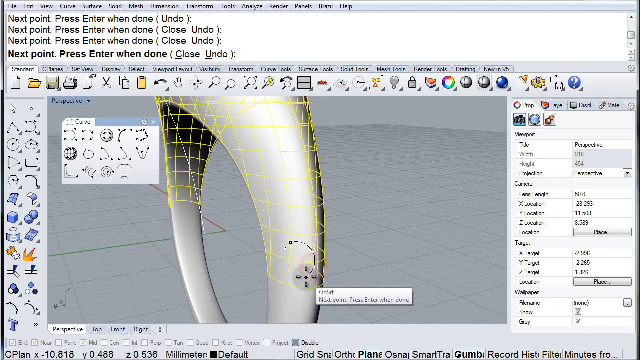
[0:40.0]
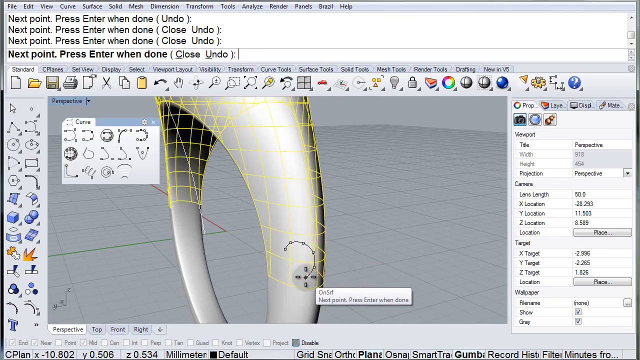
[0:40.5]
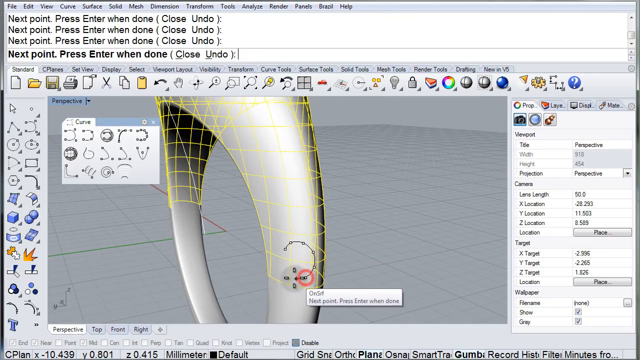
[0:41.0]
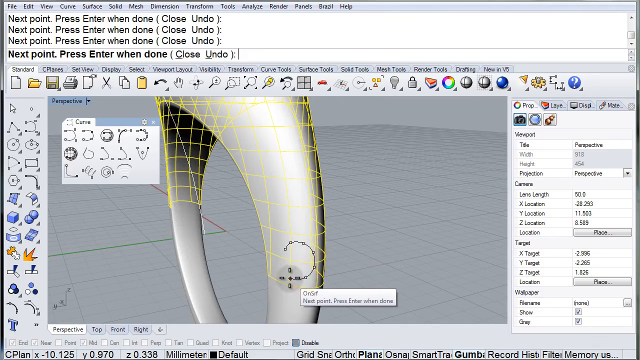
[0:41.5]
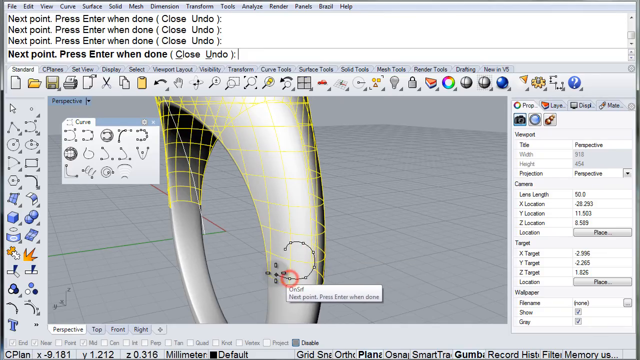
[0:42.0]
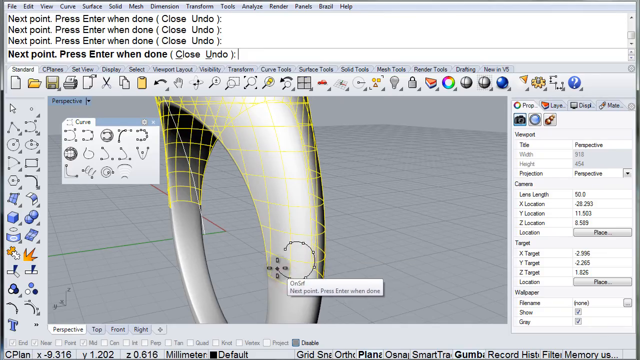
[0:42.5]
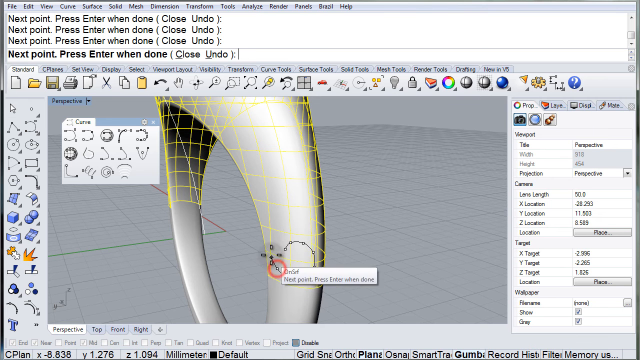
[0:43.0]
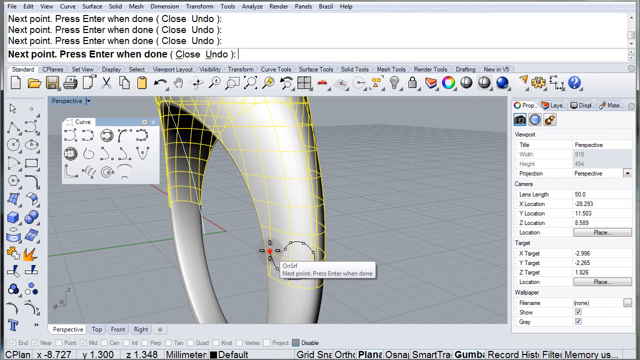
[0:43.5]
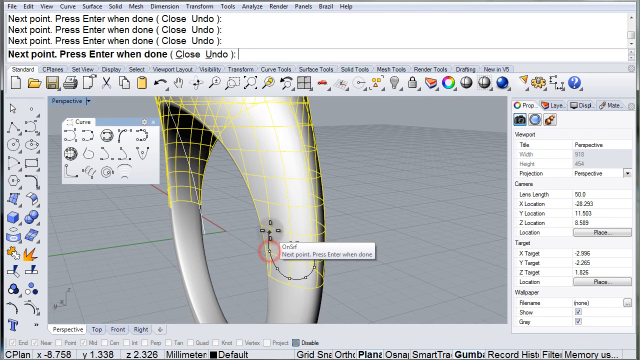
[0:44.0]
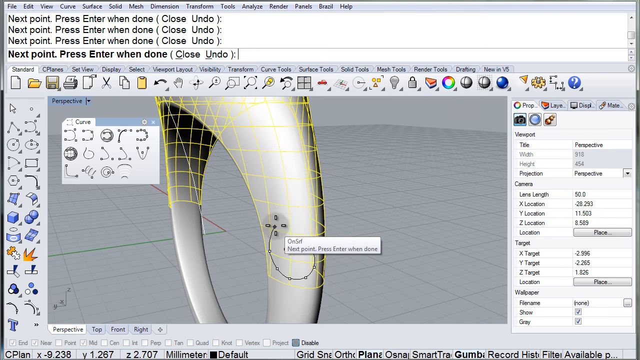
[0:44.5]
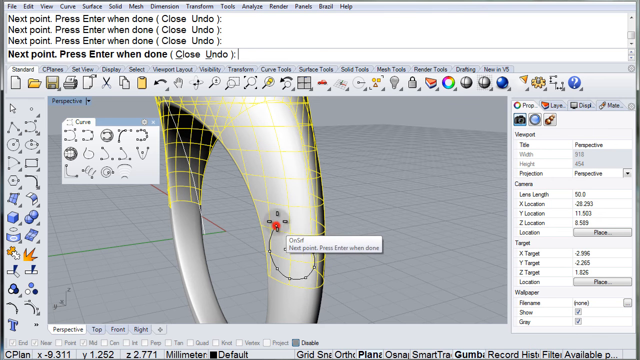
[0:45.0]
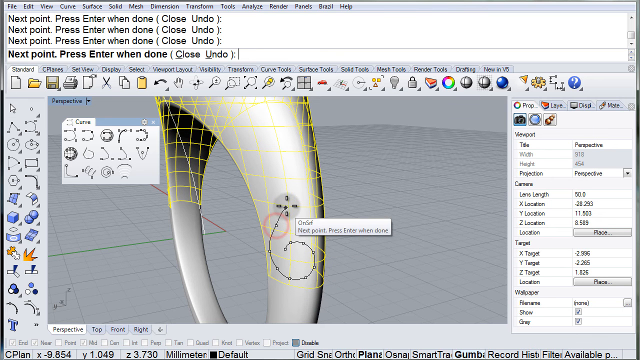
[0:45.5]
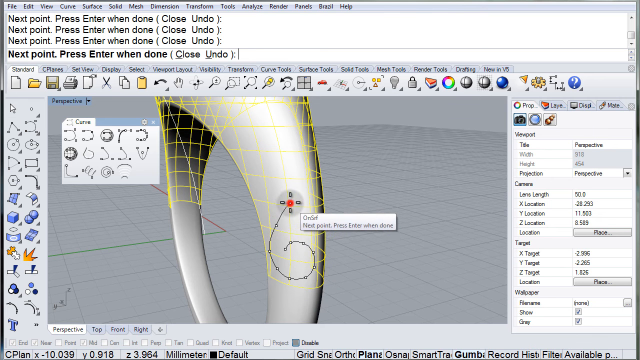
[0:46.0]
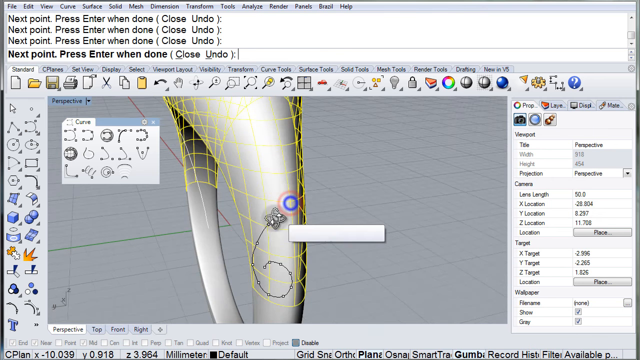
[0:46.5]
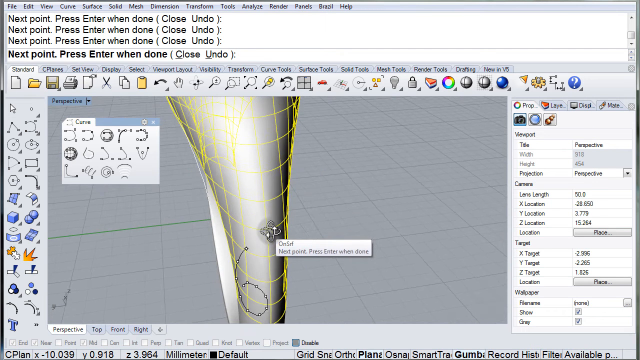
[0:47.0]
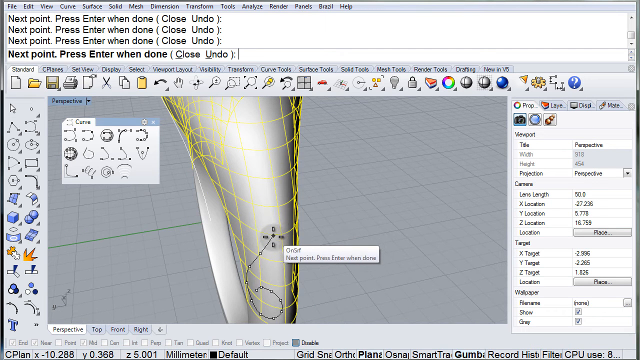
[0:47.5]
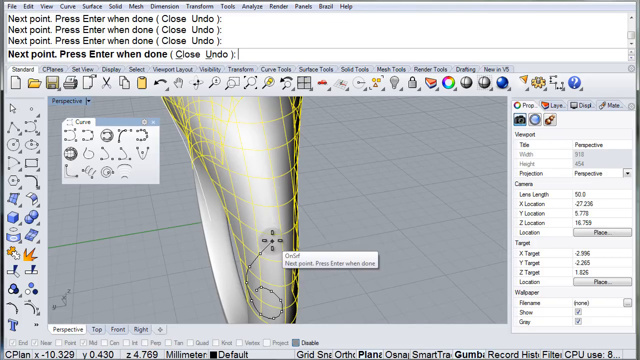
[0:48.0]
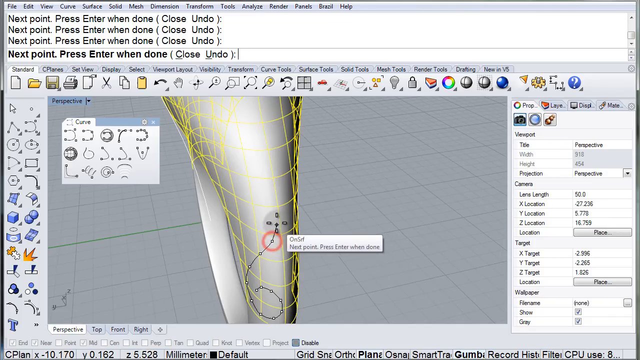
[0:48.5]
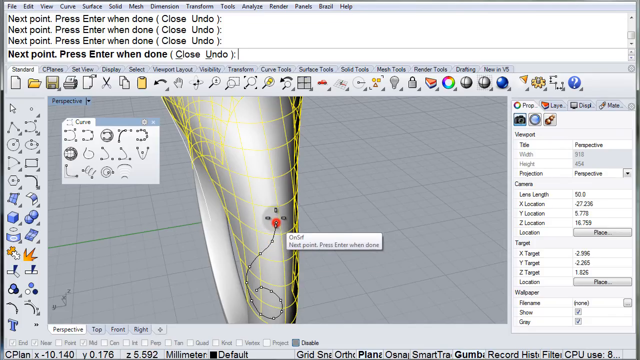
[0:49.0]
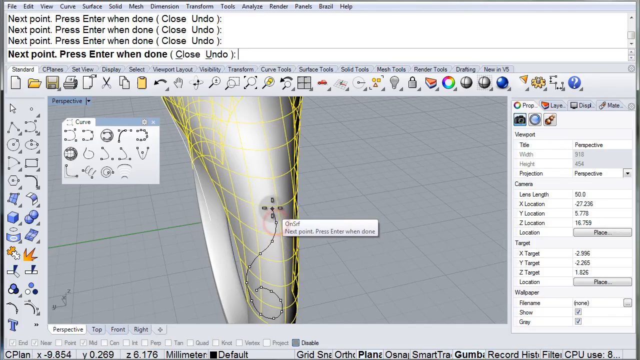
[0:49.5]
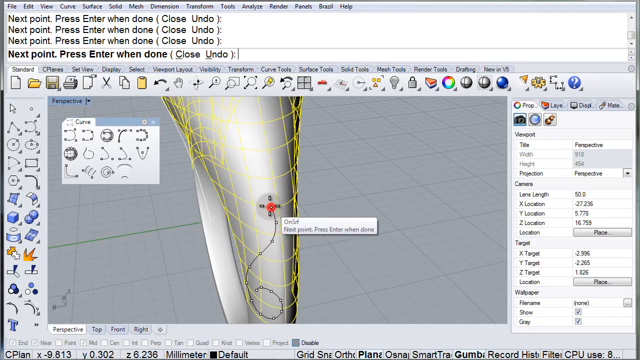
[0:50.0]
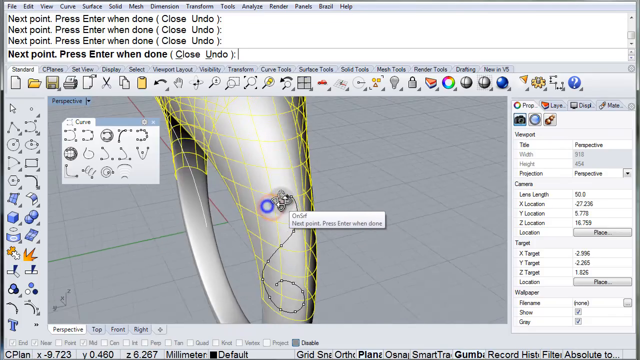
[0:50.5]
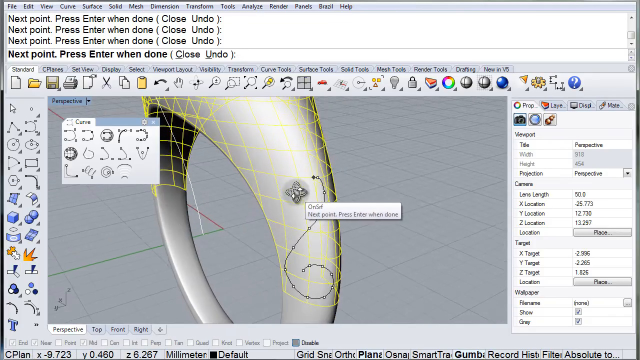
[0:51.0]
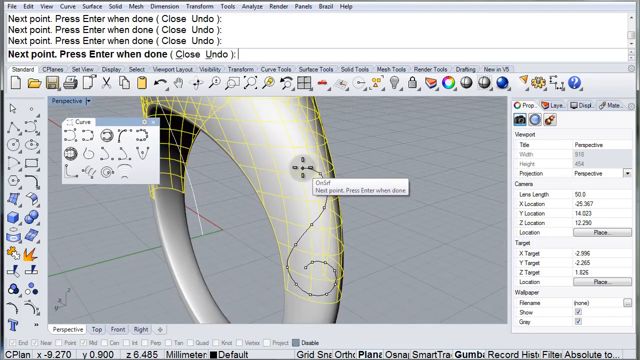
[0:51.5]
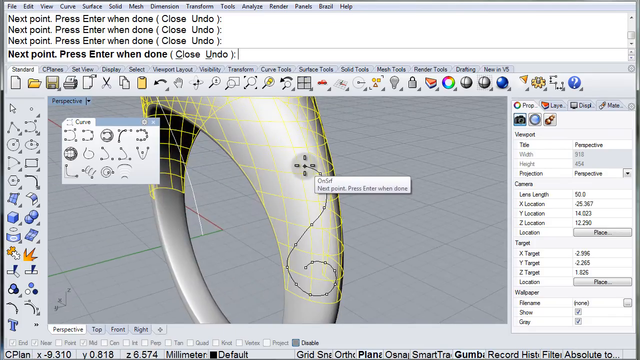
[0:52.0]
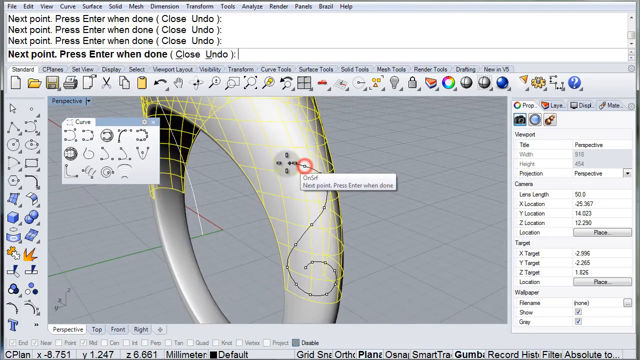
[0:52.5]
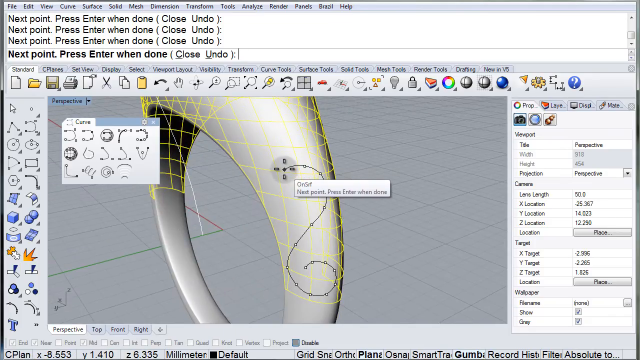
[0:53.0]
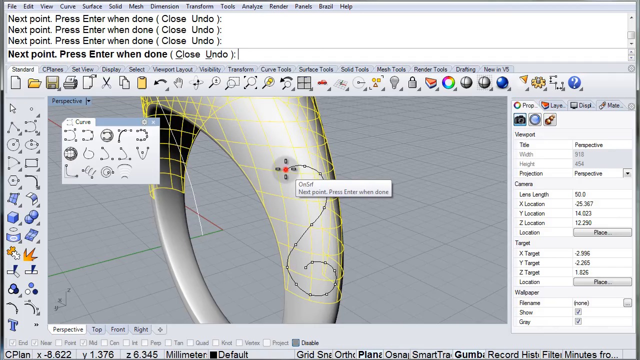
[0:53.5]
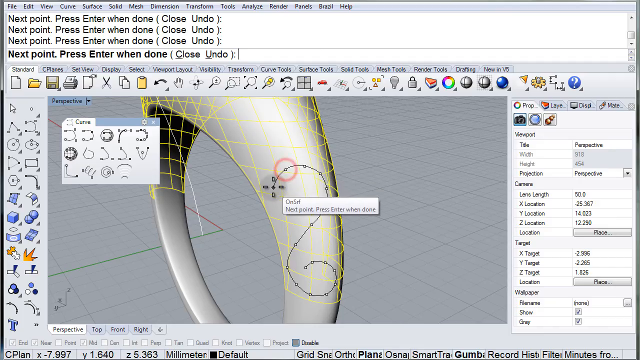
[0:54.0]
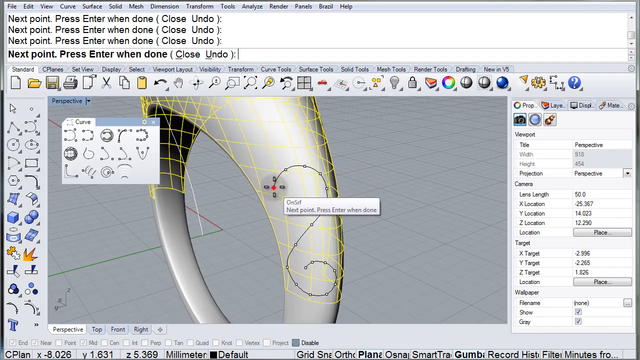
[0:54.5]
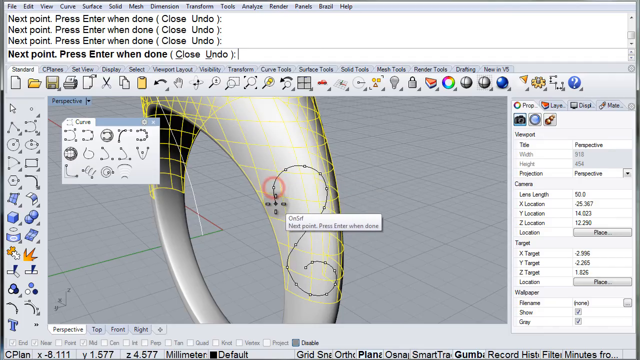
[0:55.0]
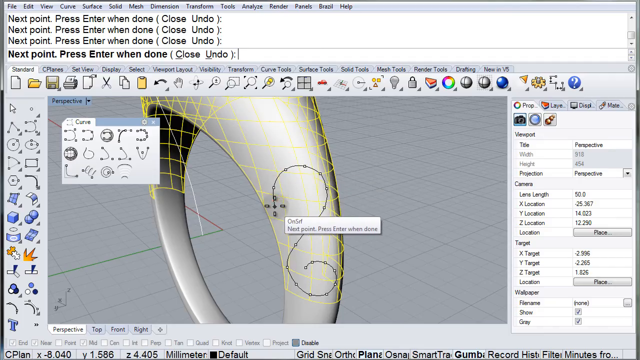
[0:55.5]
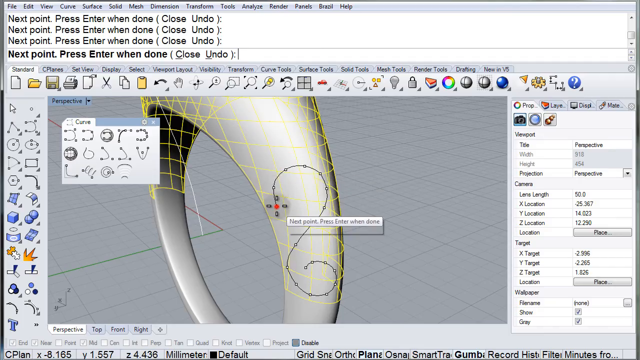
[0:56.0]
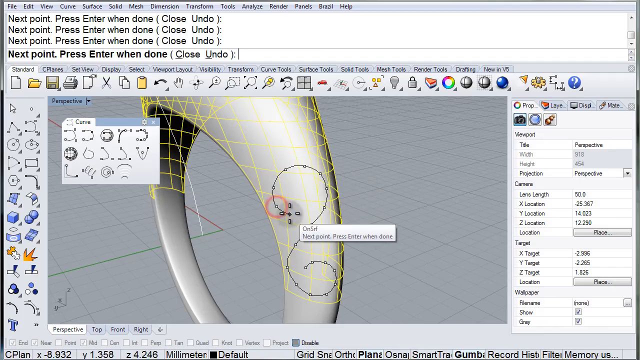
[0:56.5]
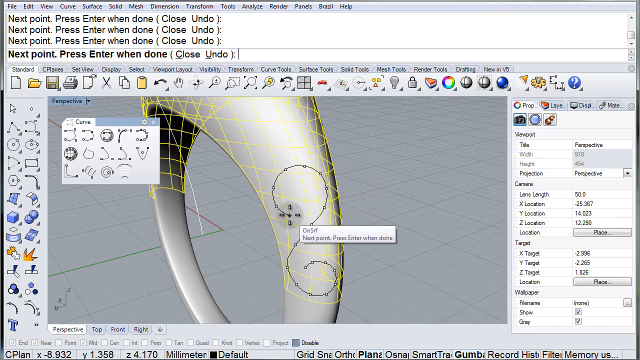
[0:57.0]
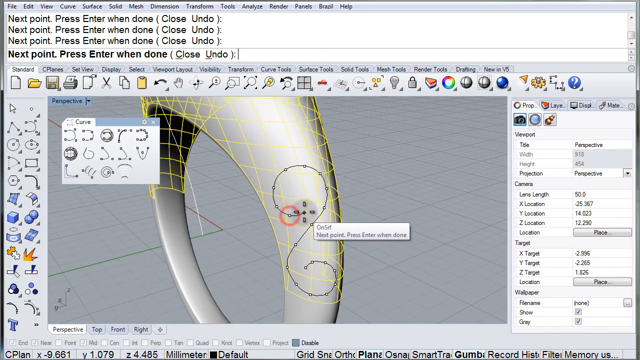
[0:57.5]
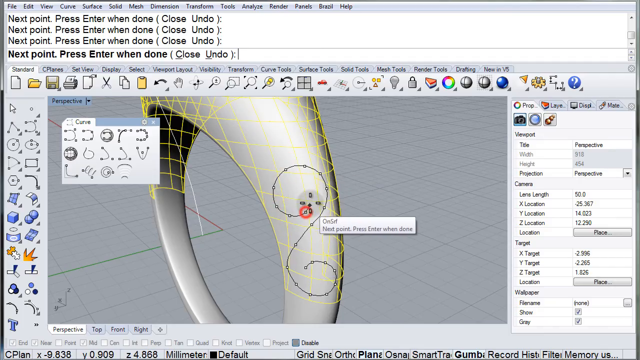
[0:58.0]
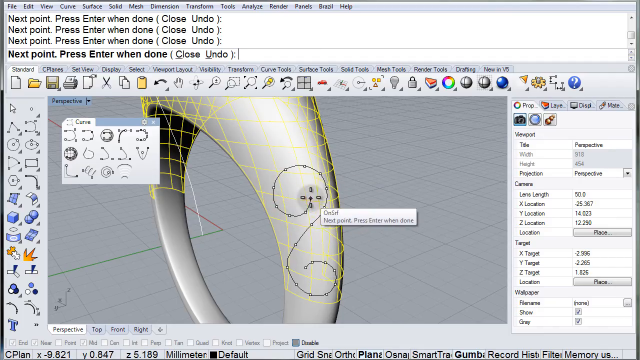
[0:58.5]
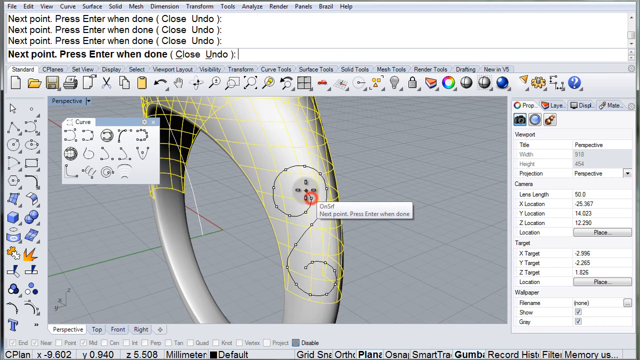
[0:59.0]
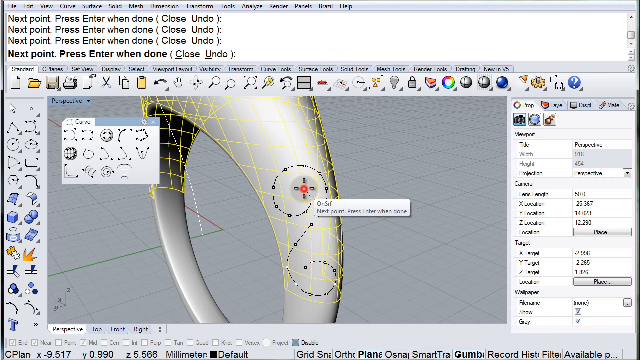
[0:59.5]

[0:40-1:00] The mouse keeps clicking on the ring in what initially looks like a counterclockwise circle, but the path becomes a counterclockwise spiral, then goes up at a diagonal, making a big curve around the top so that the shape looks like the number 6. Once the top of the 6 is in line with the widest point of the bottom circle, the mouse clicks around again, making another circle or spiral end, now clockwise, under the top of the spiral and kind of mirroring the one beneath, so the result is a fairly symmetrical swirling spiral shape on the ring. As the mouse clicks, the ring shifts. Normally it is oriented at about a 45-degree angle, with the back kind of toward the left and the front toward the right; when the path reaches the straight diagonal, the ring shifts so that its front is head on to the viewer, kind of toward the very widest part of the ring. When the clicks go back around to close the spiral, the ring shifts back to its original orientation.